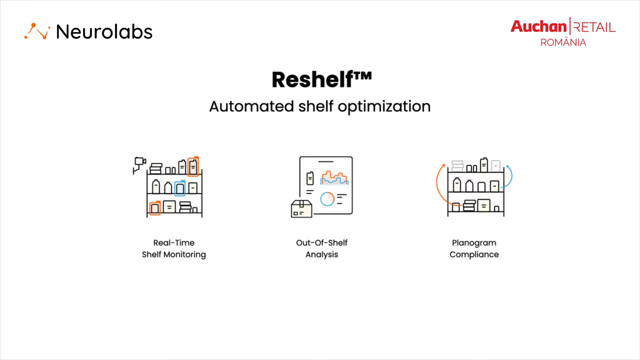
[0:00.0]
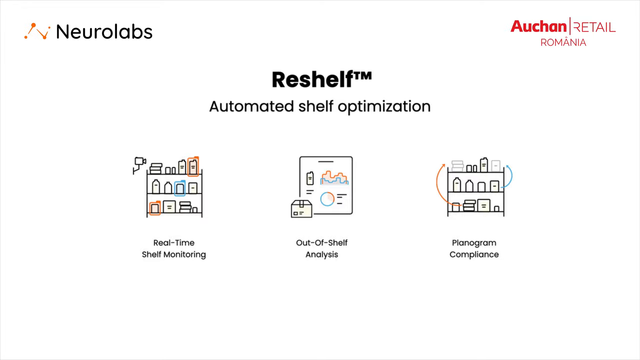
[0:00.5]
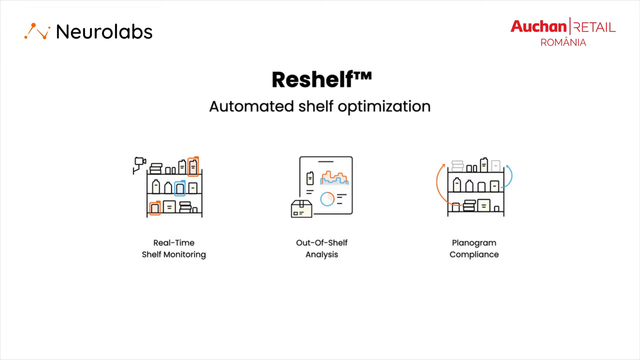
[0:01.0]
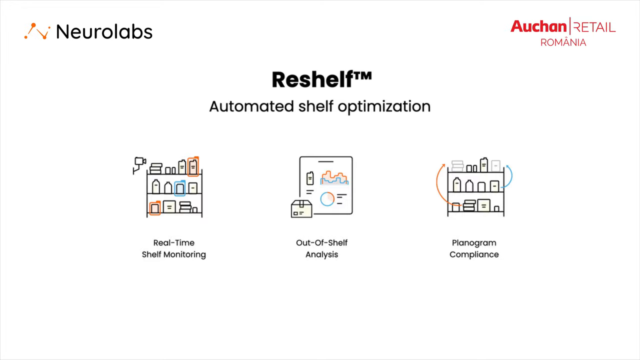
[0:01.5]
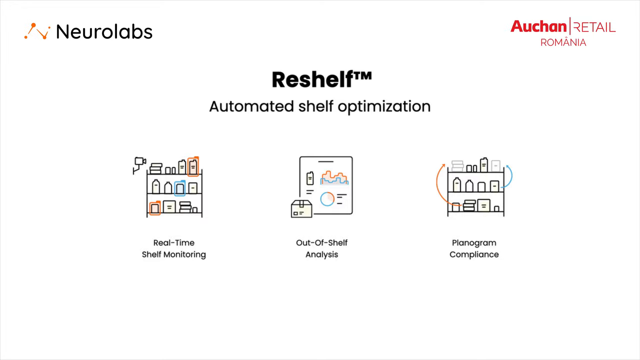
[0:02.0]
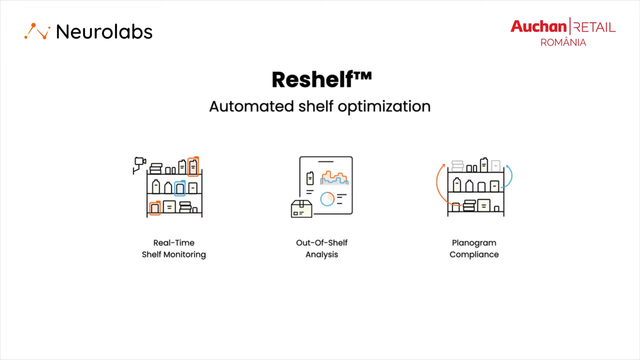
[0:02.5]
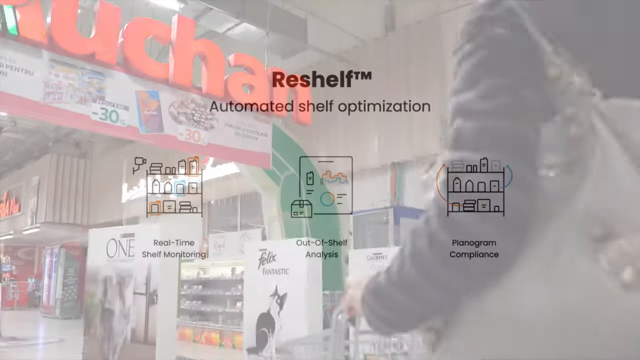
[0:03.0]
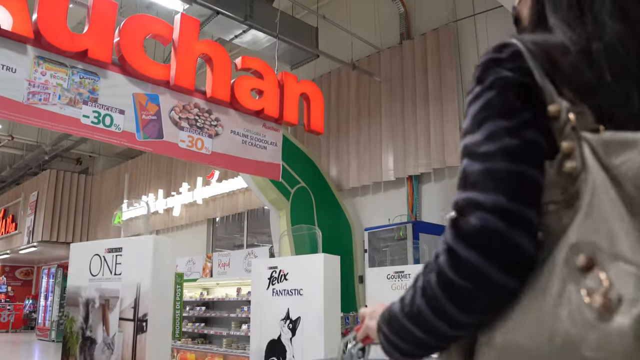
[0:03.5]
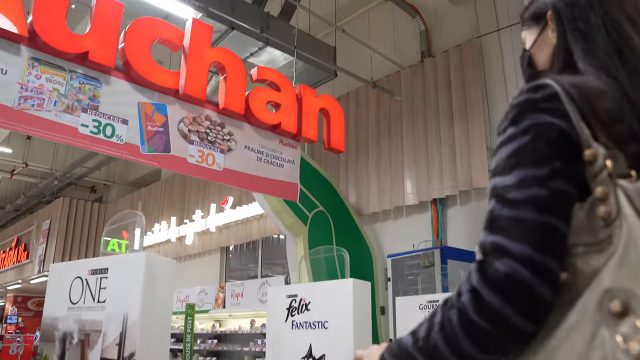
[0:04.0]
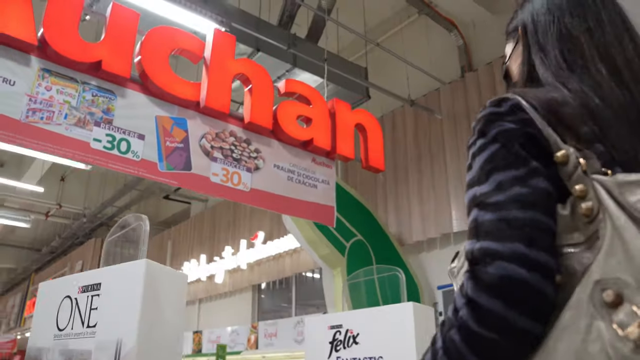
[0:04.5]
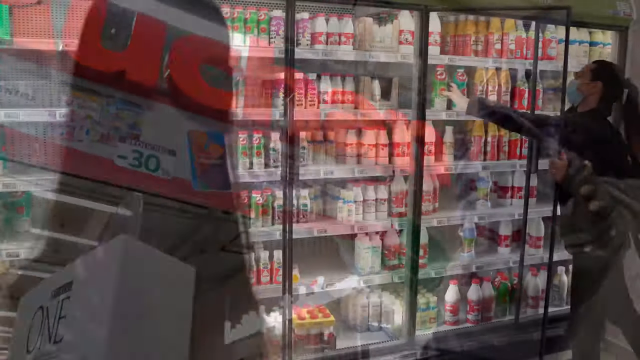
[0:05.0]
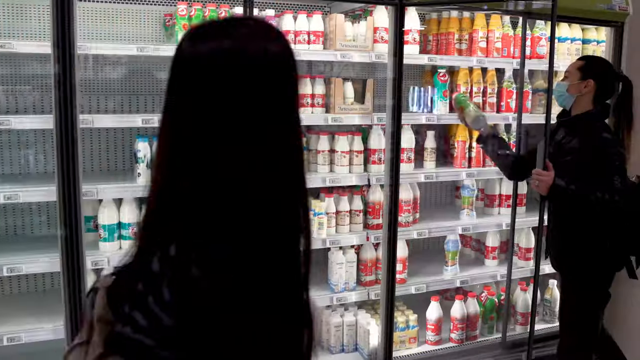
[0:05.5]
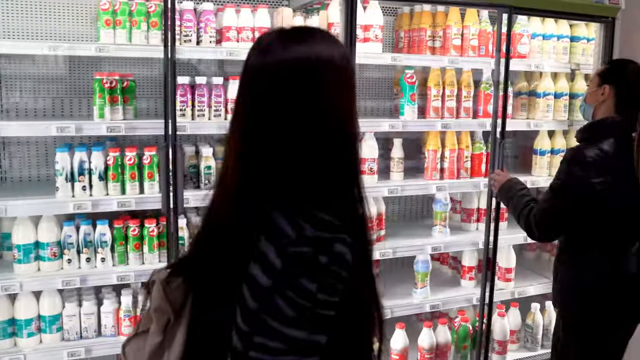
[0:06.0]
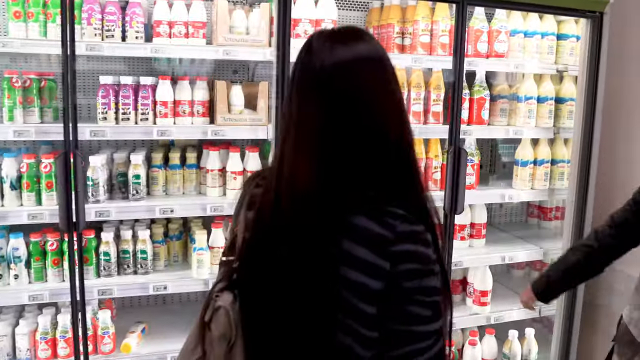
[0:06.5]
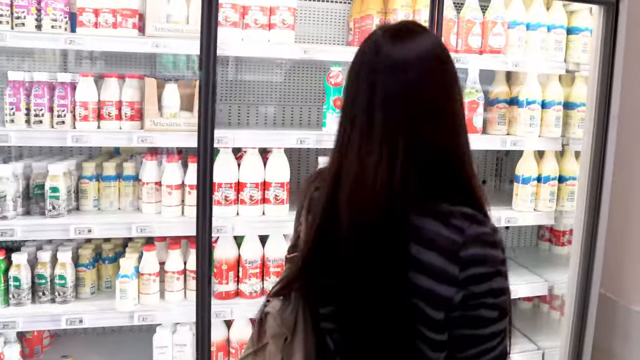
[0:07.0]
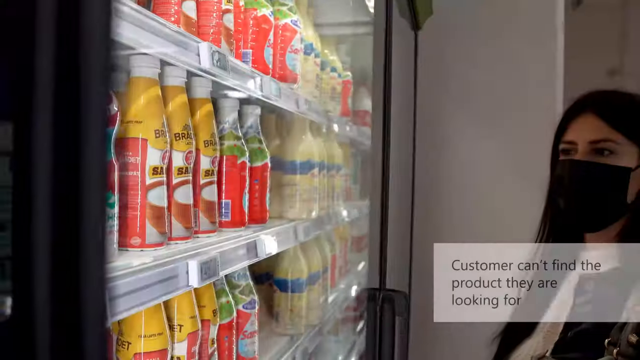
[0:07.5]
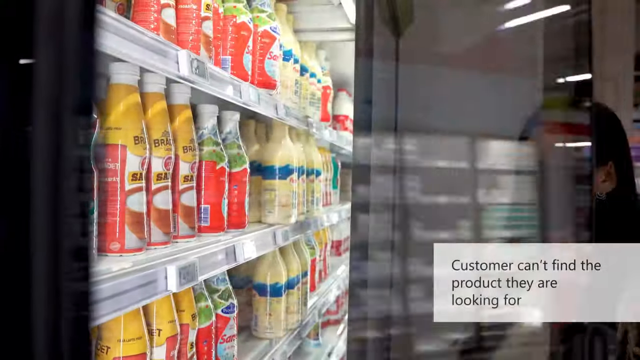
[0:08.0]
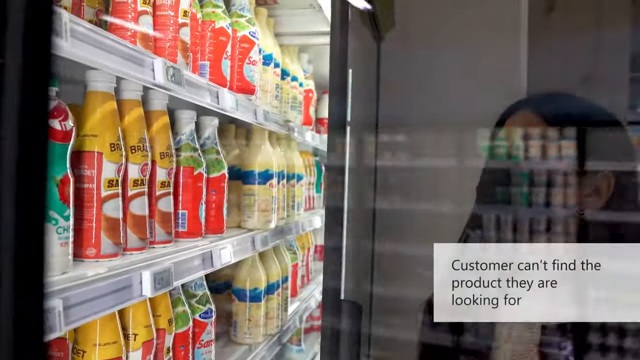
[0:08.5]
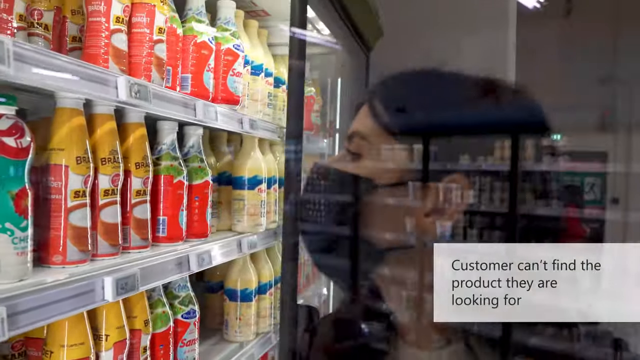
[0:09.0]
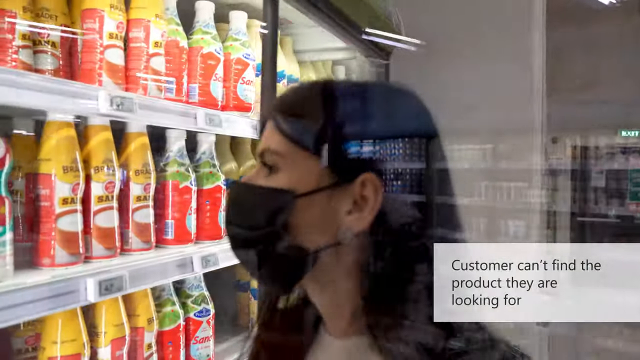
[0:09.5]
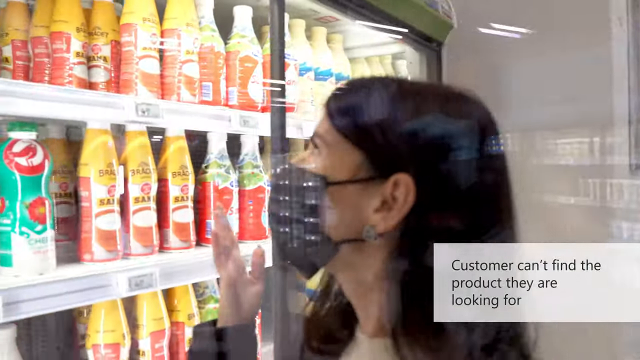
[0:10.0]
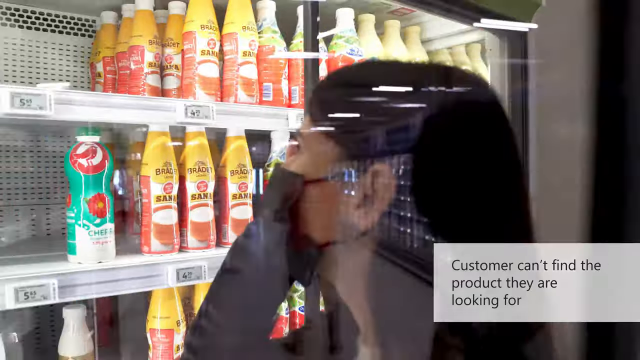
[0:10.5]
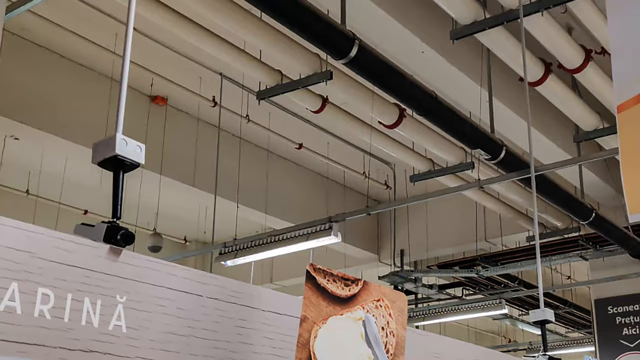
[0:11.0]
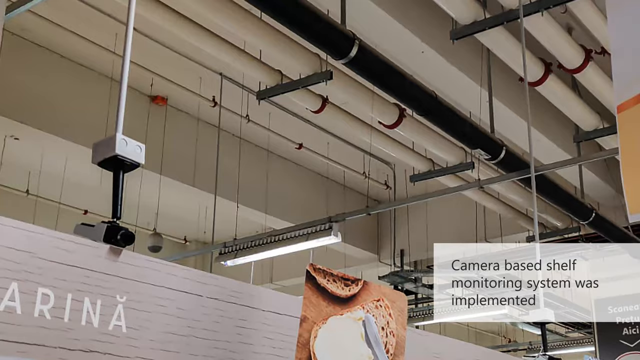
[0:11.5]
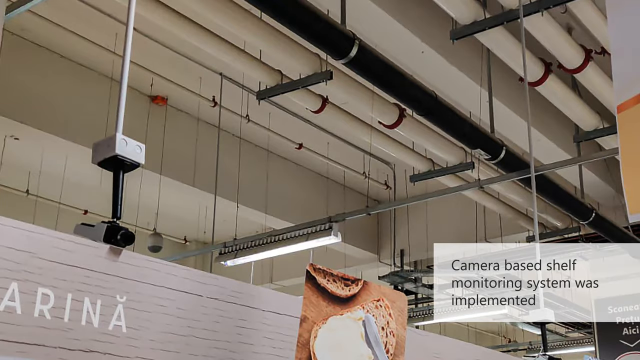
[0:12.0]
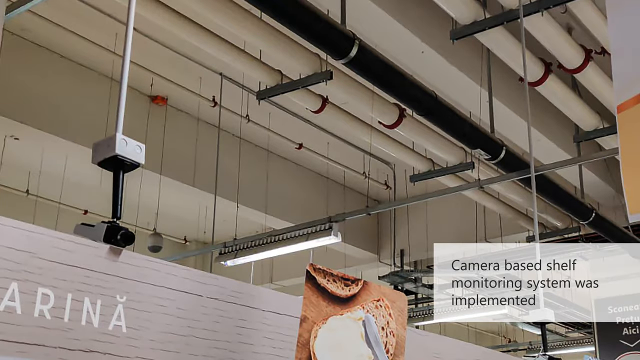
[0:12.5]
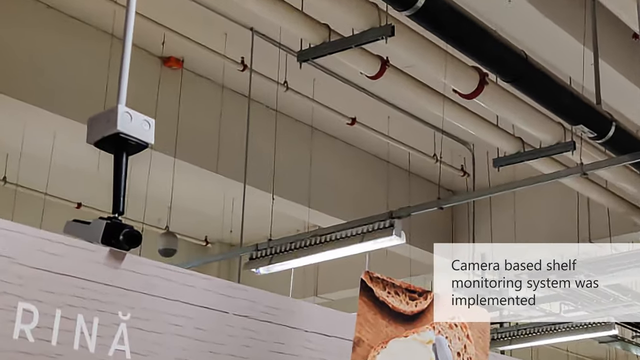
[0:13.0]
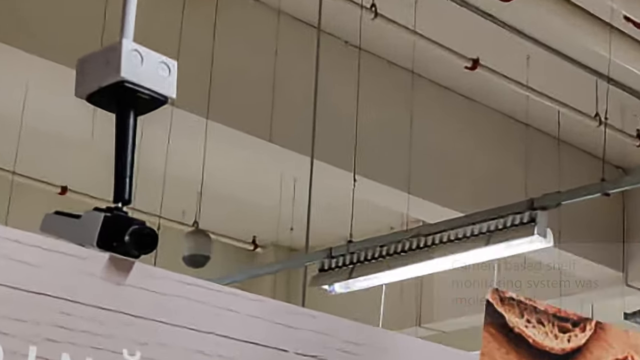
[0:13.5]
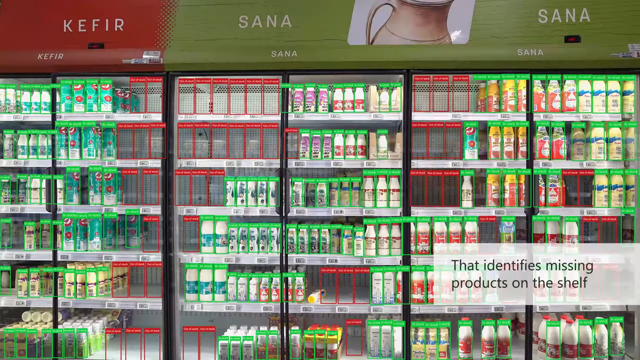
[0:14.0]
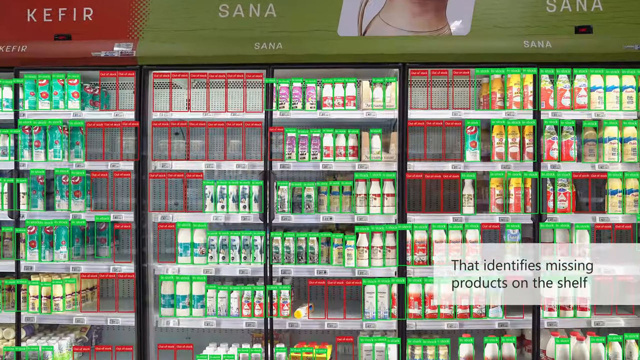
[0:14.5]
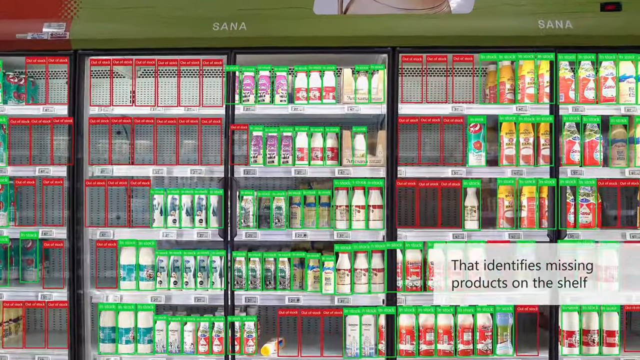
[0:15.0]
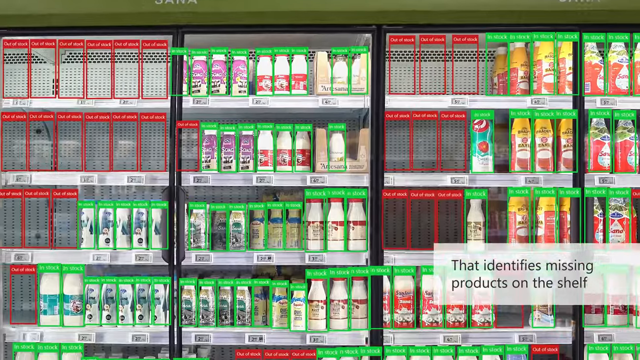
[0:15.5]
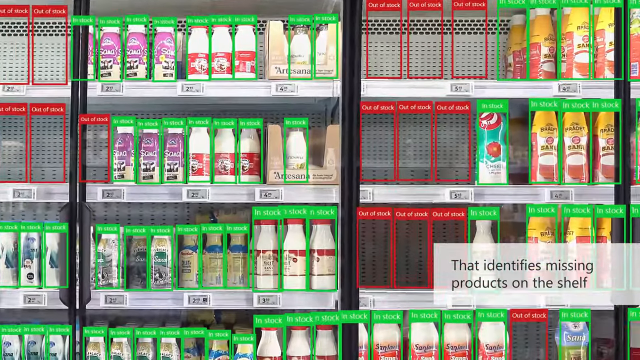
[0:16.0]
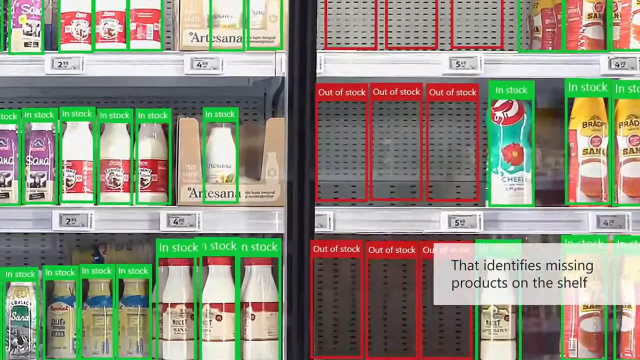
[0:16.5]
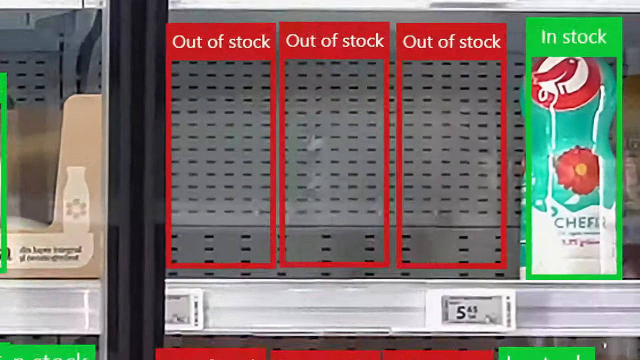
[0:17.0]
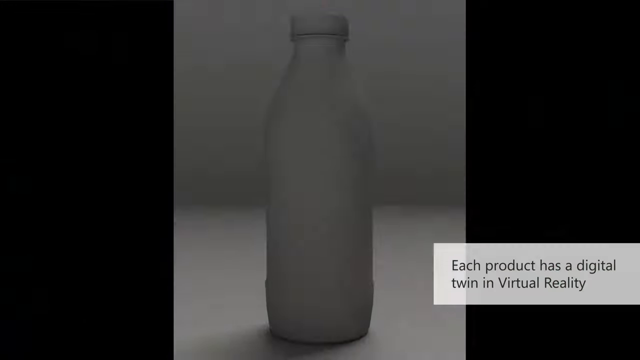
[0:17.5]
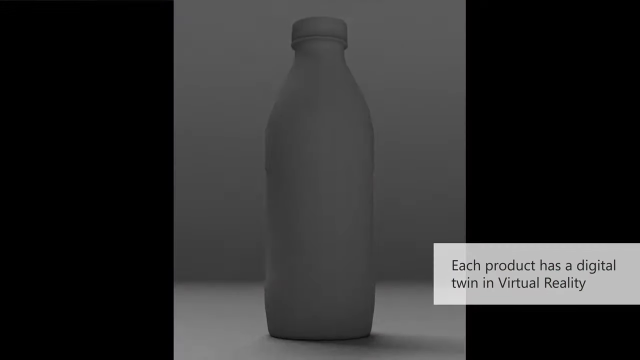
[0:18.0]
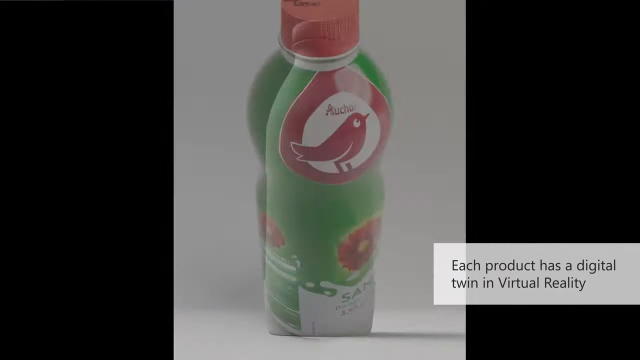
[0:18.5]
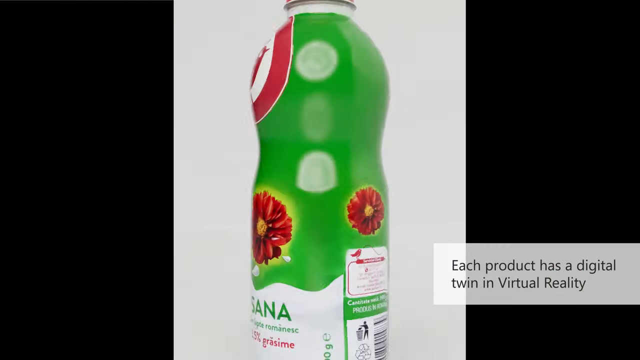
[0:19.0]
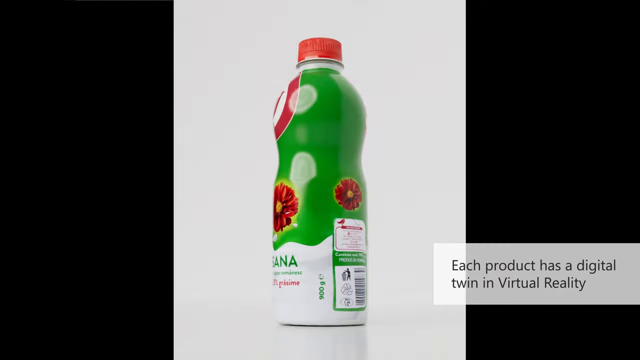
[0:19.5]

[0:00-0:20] The video opens with a look at Neural Labs and their system called Reshelf, which apparently helps stores keep their shelves organized and fully stocked. An animation shows three main functions: real-time shelf monitoring, apparently identifying when items are missing, and making sure the layout matches the store's plan. The scene then shifts to what looks like a real-life setting inside a grocery store, where a woman is looking for something in the refrigerator section. Although the shelves are mostly full, she cannot find the item she needs. She looks frustrated, and close-ups of the product shelves apparently reveal that certain slots are empty. A label on the screen reads "customer can't find the product they are looking for." The item appears to be out of stock. Overhead shelf cameras are installed in the store, and a digital scan appears to highlight which products are missing in real time using a color-coded outline: green boxes mark stocked products, while red zones mark empty areas. Text overhead on the image reads "that identifies missing products on the shelf."